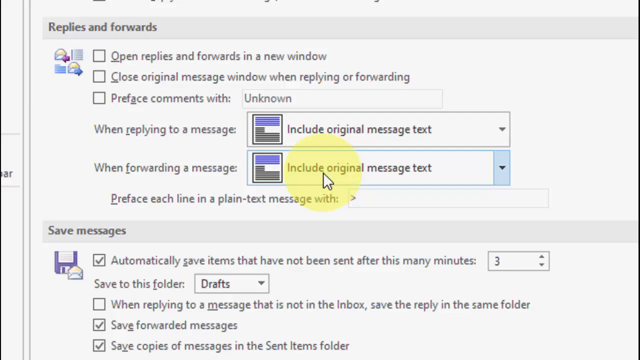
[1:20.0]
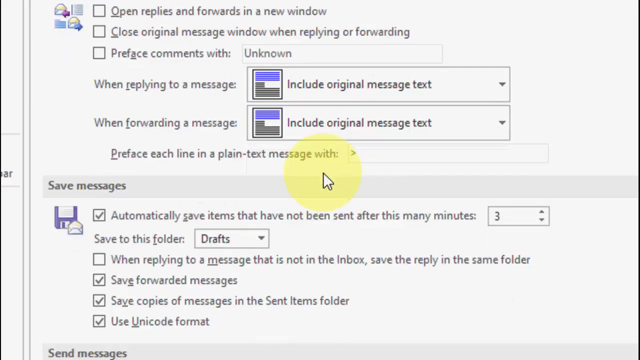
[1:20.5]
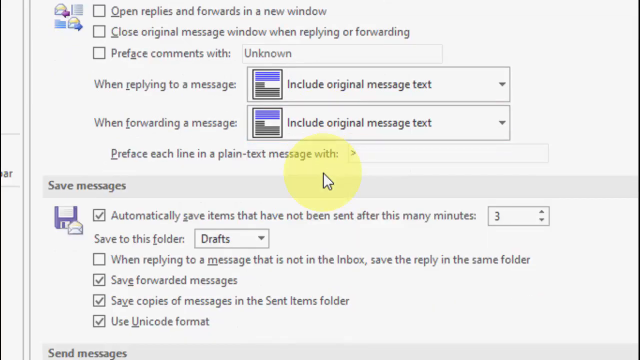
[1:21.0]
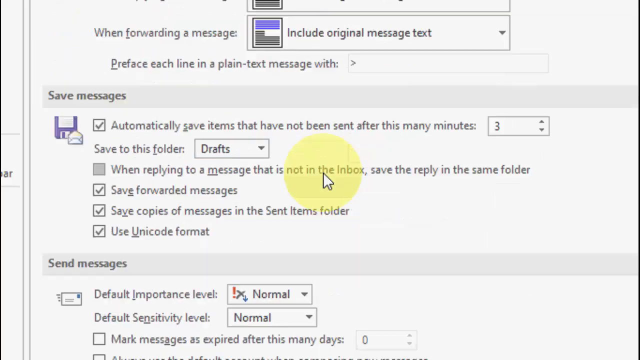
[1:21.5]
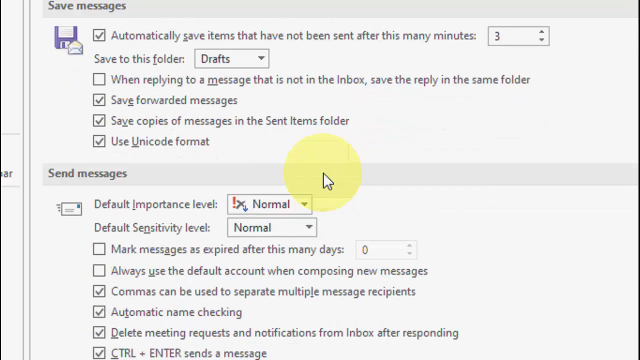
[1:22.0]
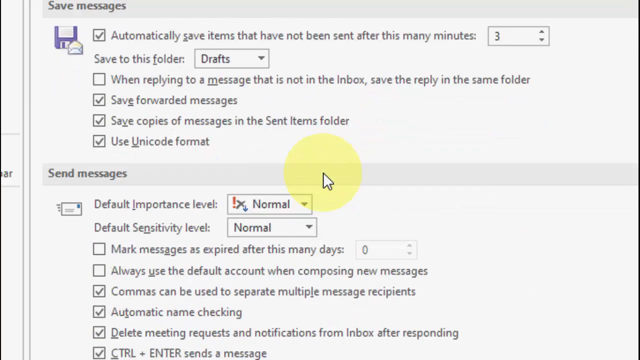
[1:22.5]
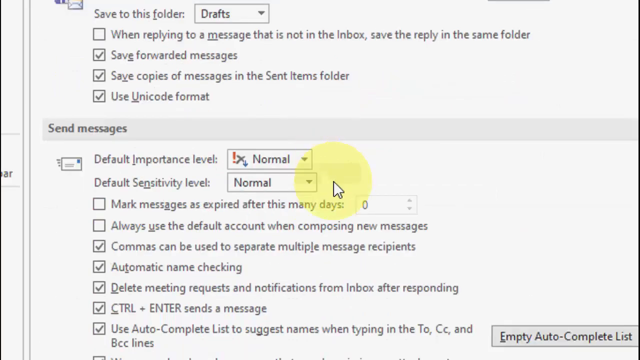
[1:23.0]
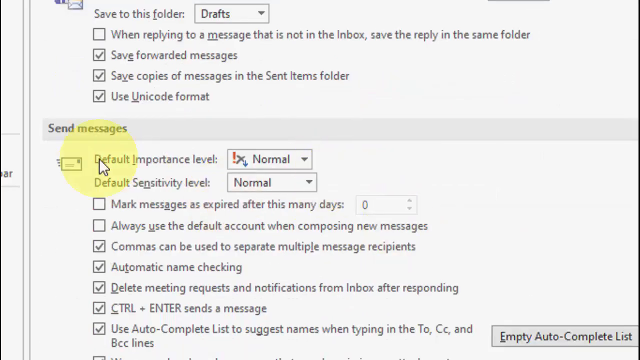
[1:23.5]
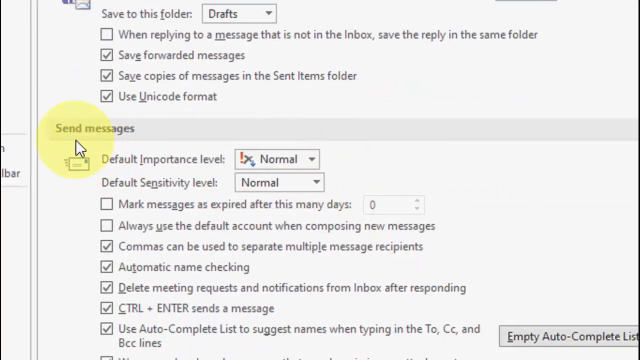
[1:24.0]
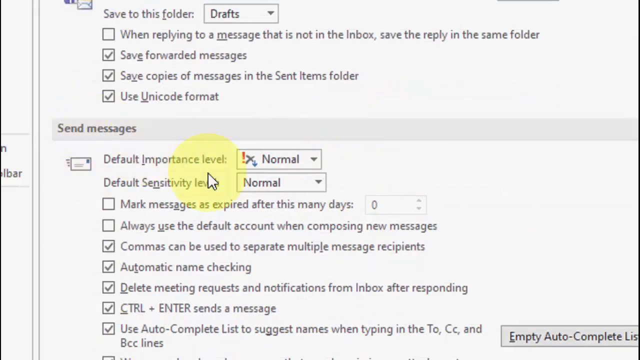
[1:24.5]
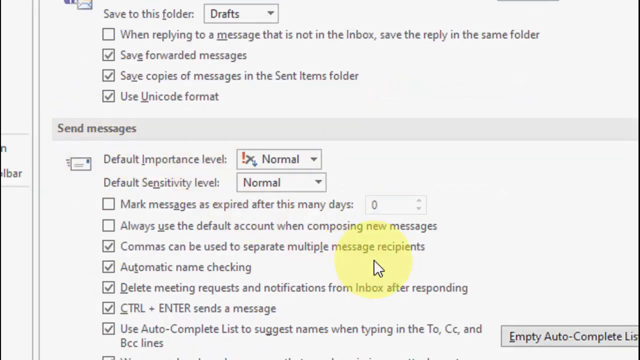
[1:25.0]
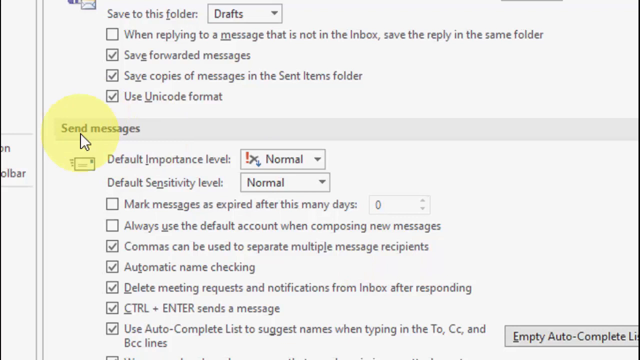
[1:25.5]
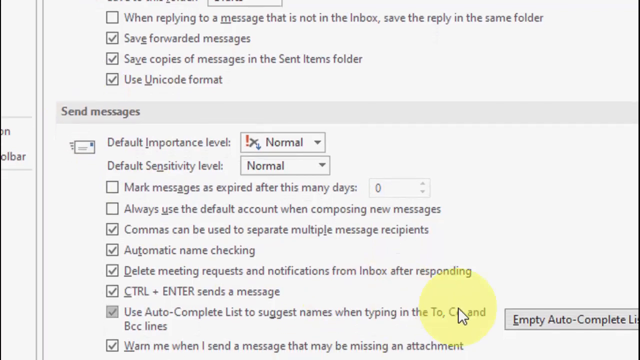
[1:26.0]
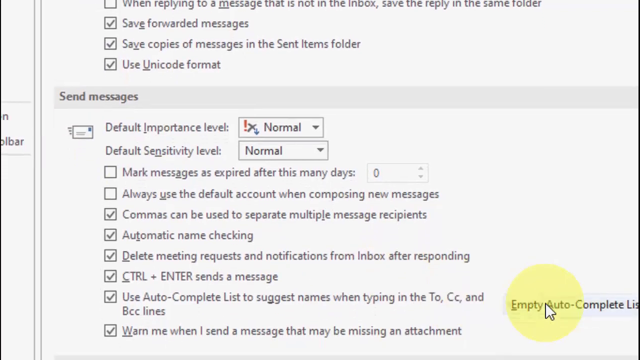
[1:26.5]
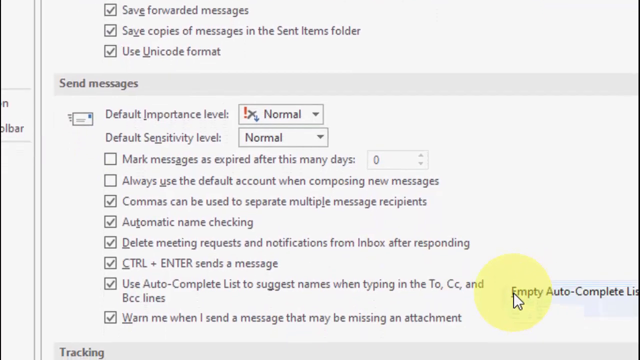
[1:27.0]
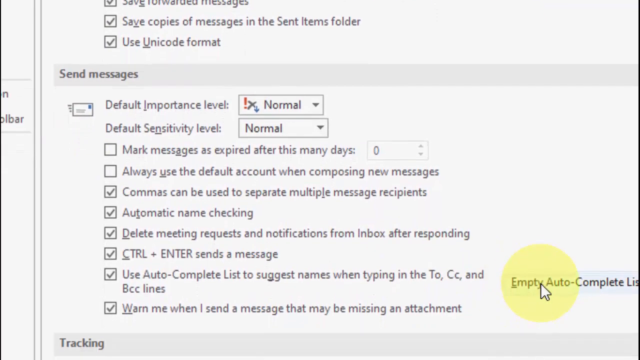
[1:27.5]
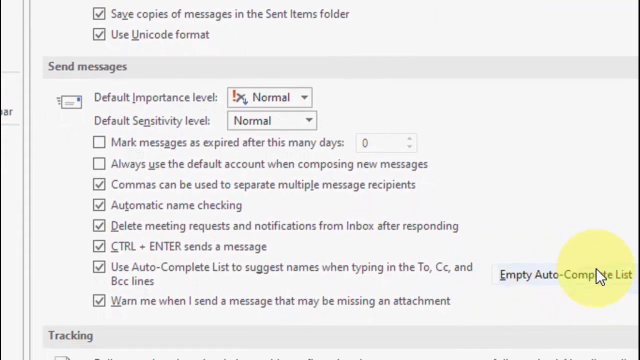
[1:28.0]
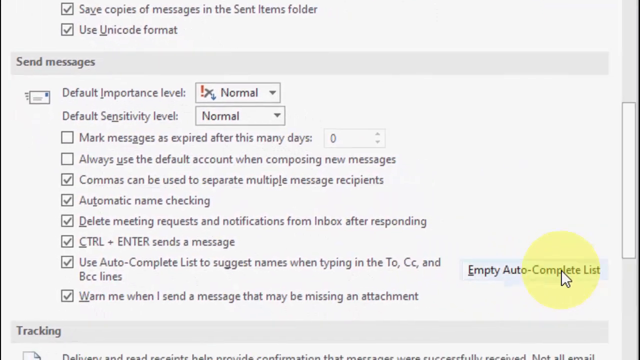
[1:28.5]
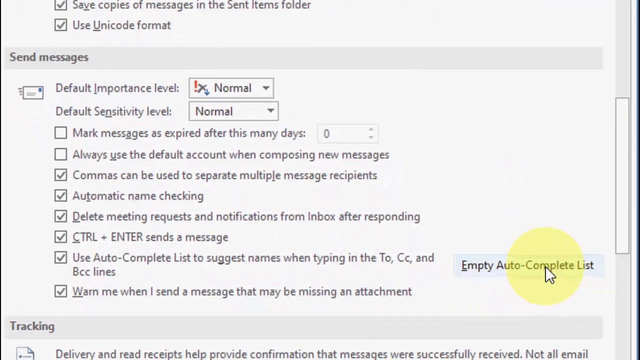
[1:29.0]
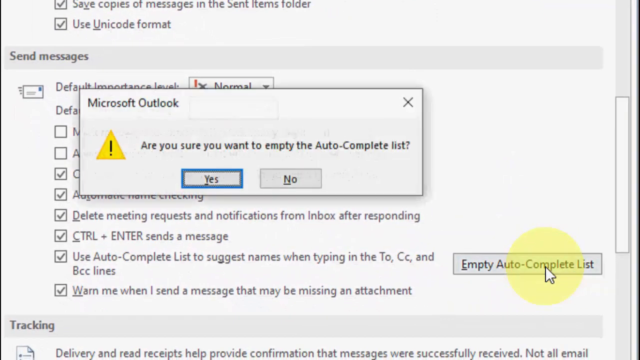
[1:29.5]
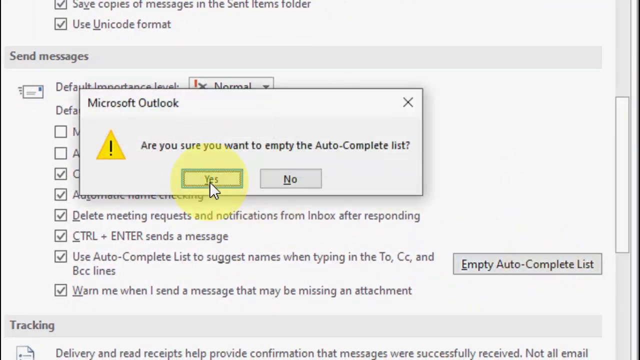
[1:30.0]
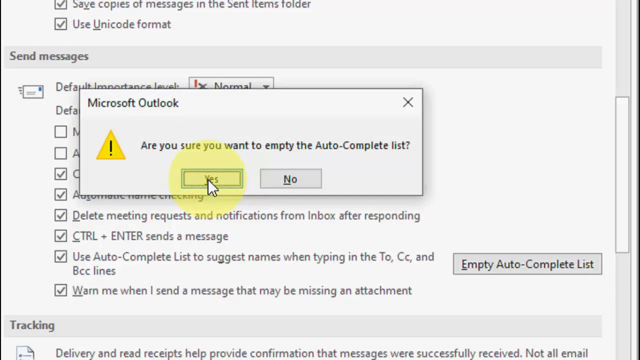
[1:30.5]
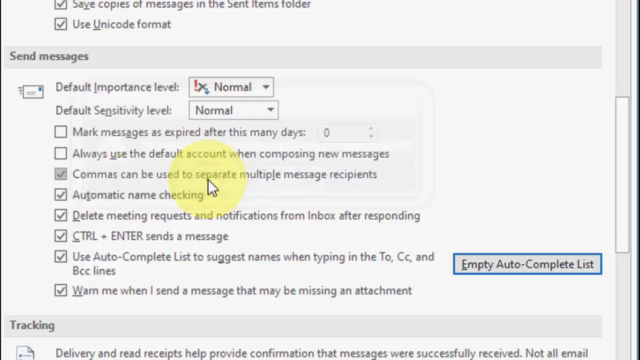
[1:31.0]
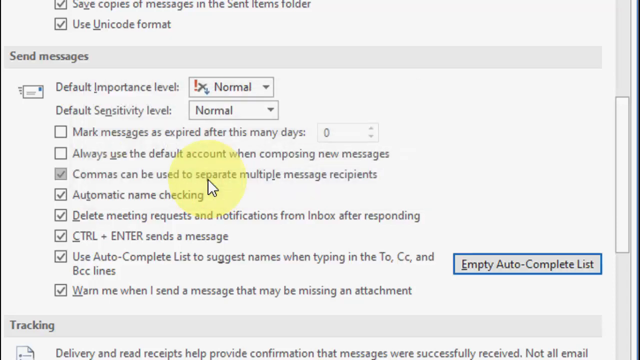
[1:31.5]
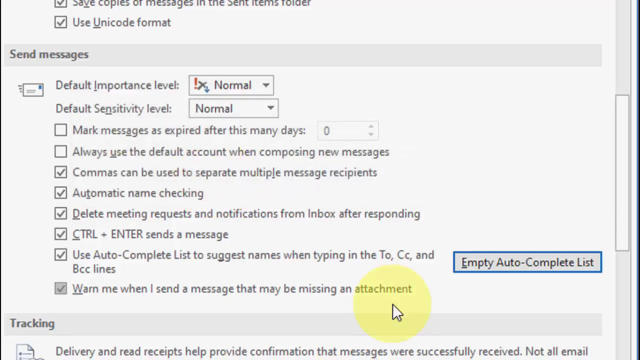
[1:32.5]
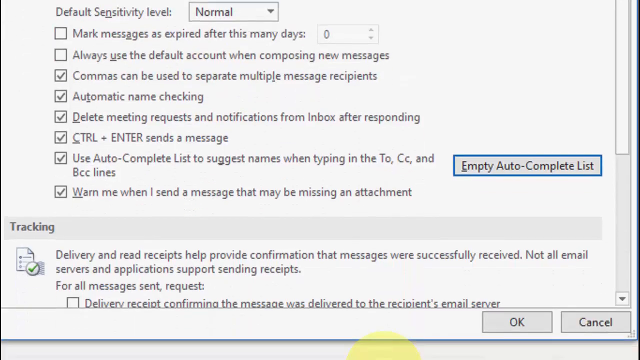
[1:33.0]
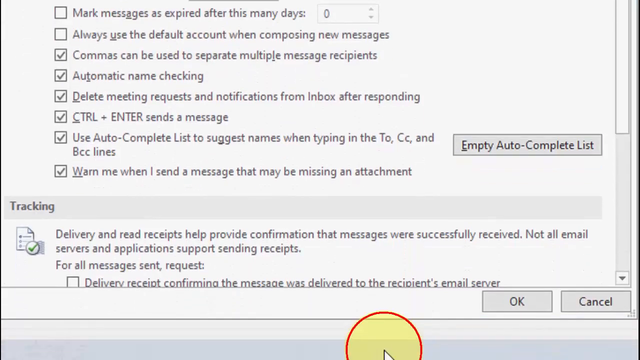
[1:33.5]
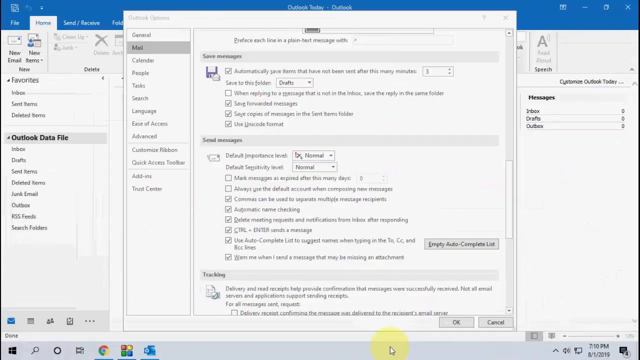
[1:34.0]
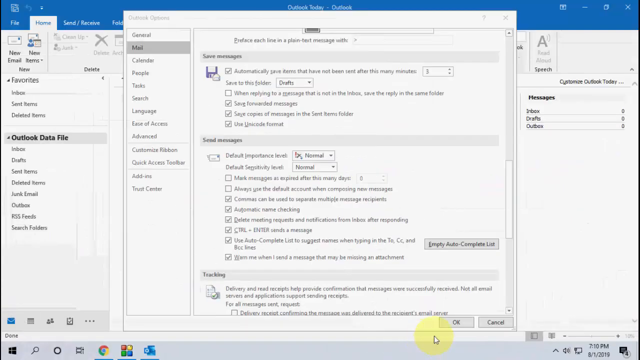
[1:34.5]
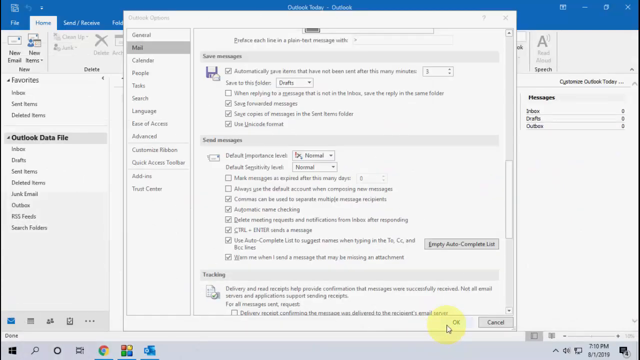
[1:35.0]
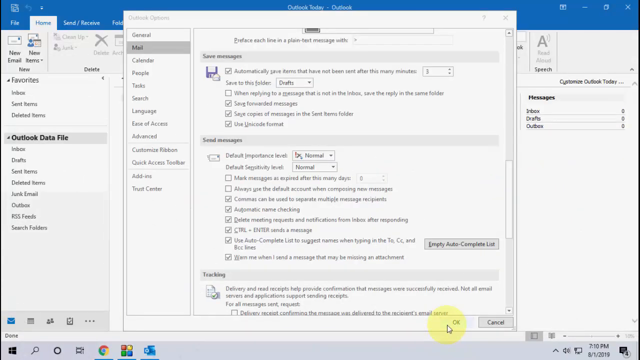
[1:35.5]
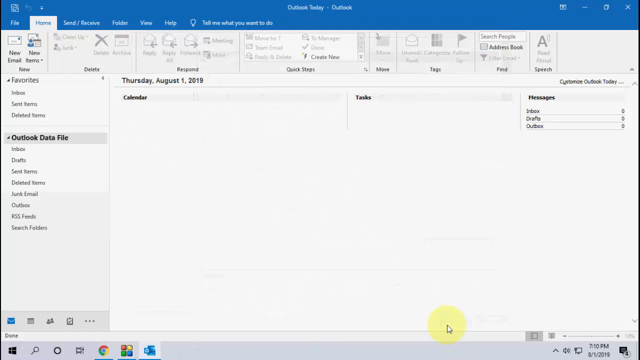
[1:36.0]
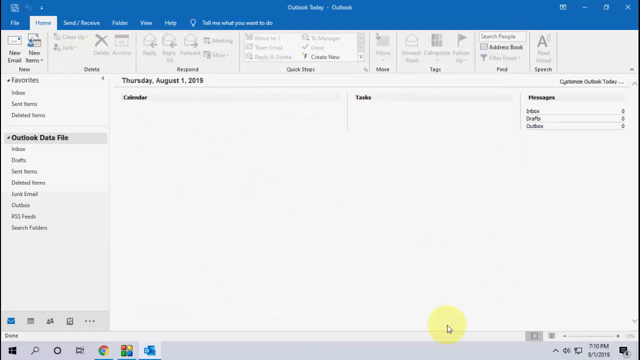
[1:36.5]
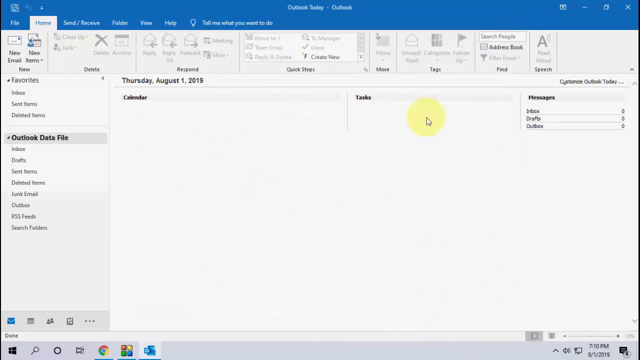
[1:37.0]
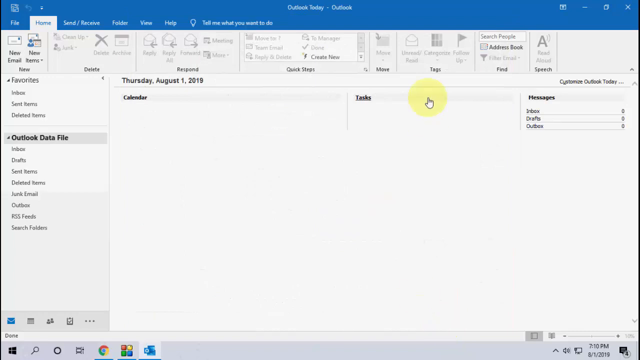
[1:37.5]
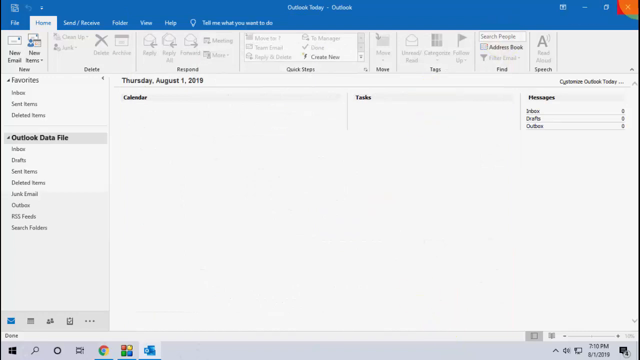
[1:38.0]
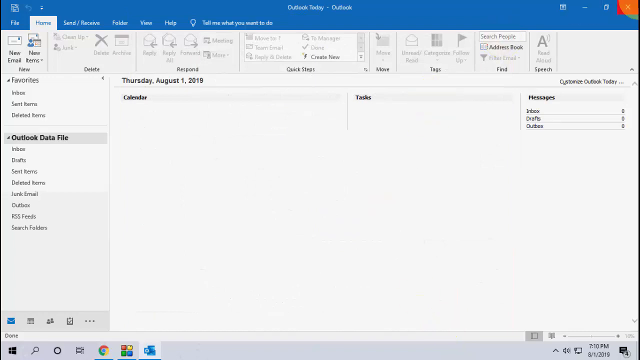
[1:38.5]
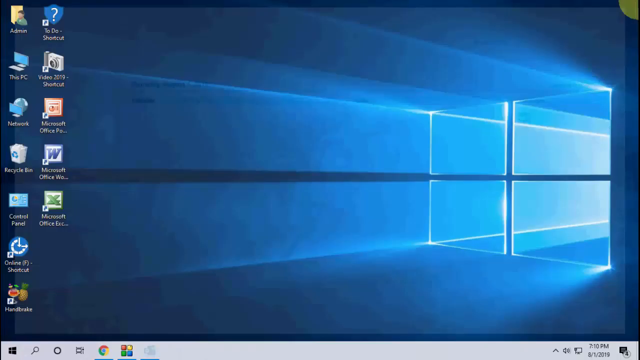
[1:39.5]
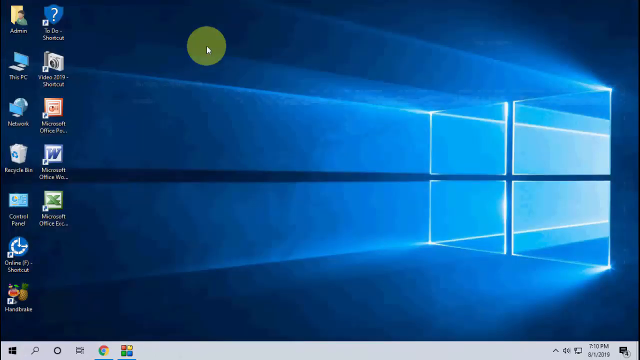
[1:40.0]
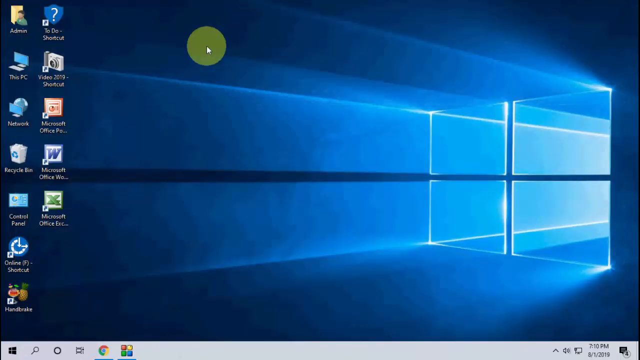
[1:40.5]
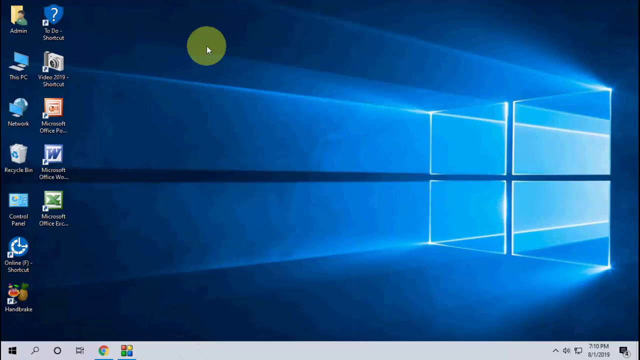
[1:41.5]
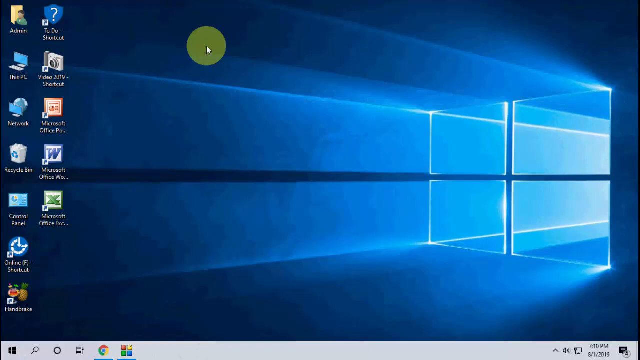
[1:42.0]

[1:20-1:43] A mouse icon with a yellow highlighted area around it scrolls down the page to around where it says "send messages", then moves to where it says "empty autocomplete list", highlighting different elements of the page along the way. It clicks on empty autocomplete list, which brings up a box titled "Microsoft Outlook" that reads "Are you sure you want to empty the autocomplete list?" It clicks yes and the box closes. OK is then clicked and the entire window is closed. A traditional desktop page appears, with a background showing the Windows logo and different folders and files on the left side of the screen.